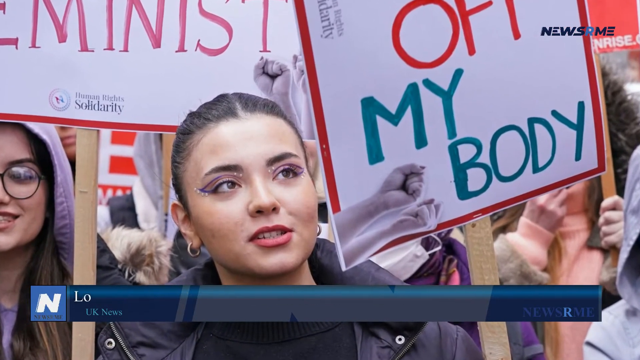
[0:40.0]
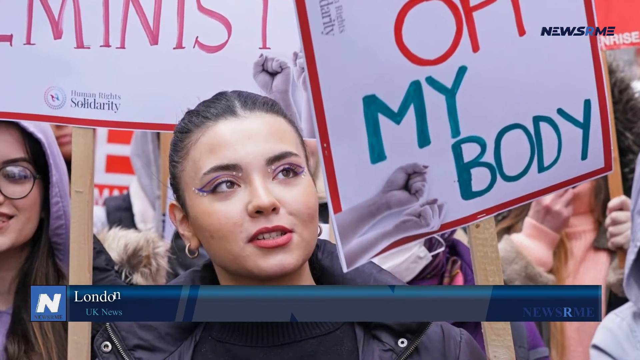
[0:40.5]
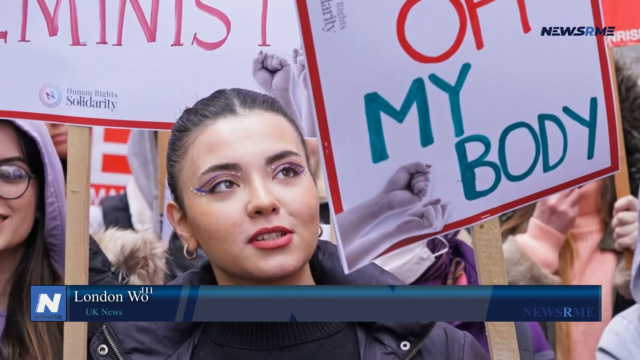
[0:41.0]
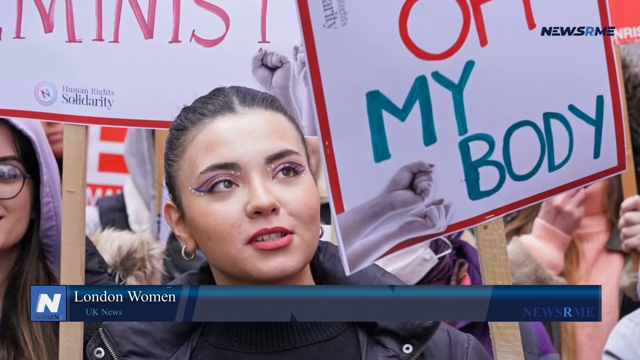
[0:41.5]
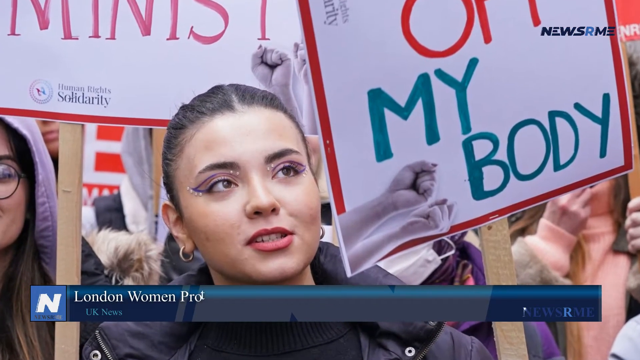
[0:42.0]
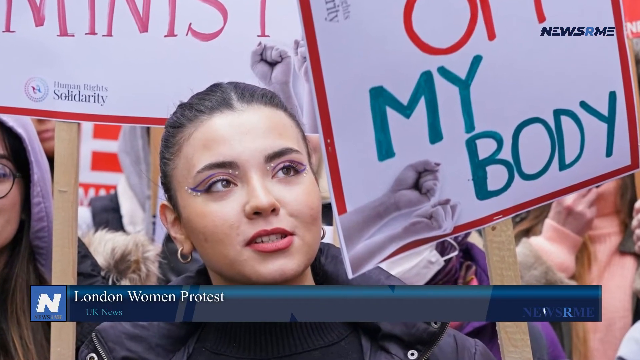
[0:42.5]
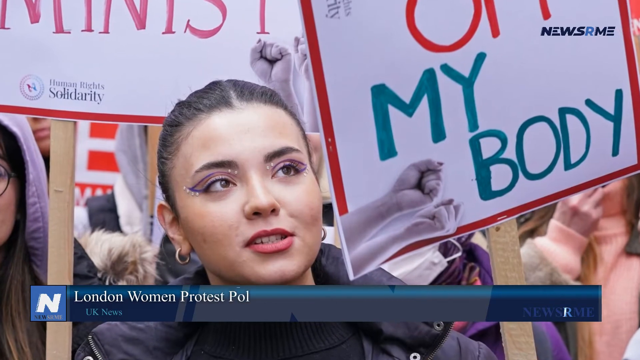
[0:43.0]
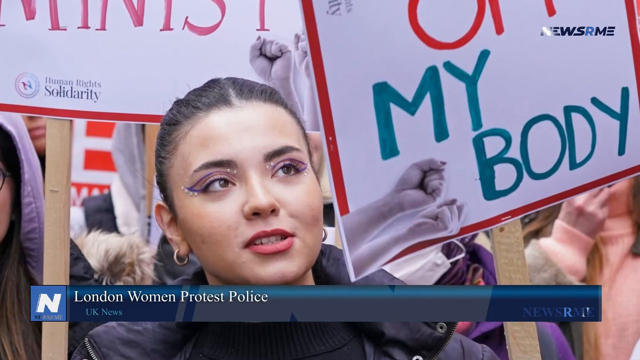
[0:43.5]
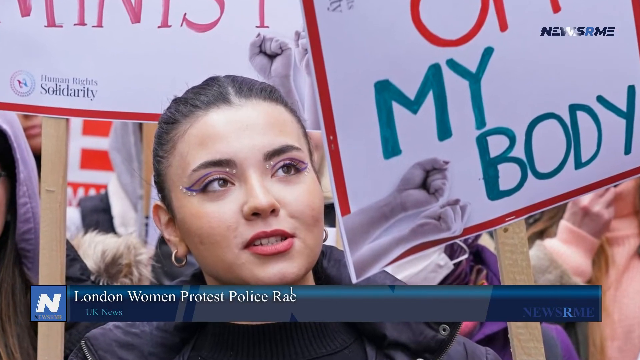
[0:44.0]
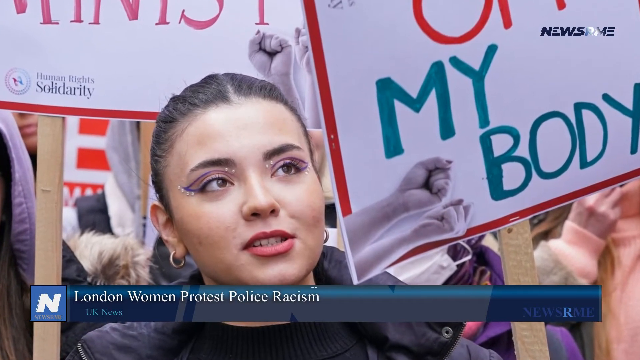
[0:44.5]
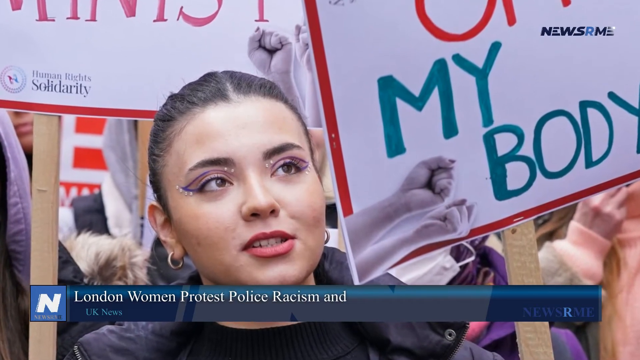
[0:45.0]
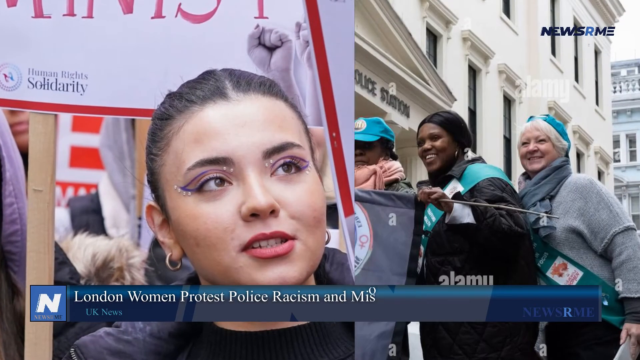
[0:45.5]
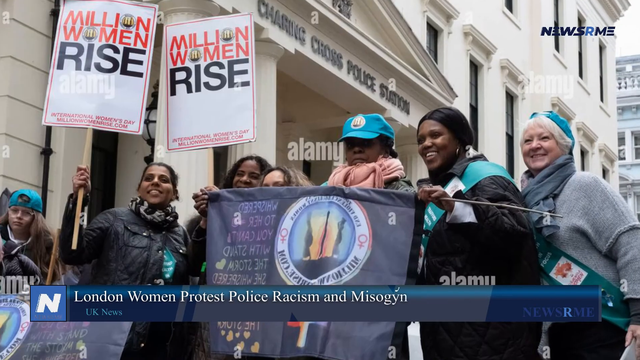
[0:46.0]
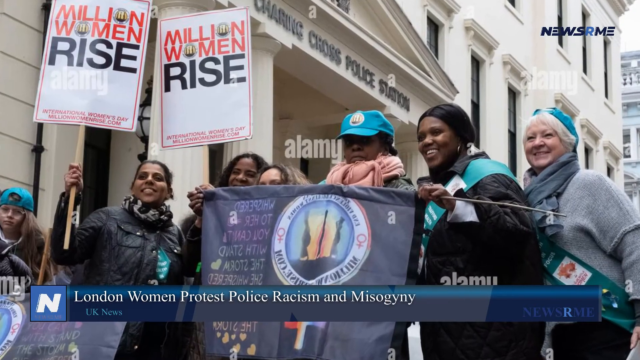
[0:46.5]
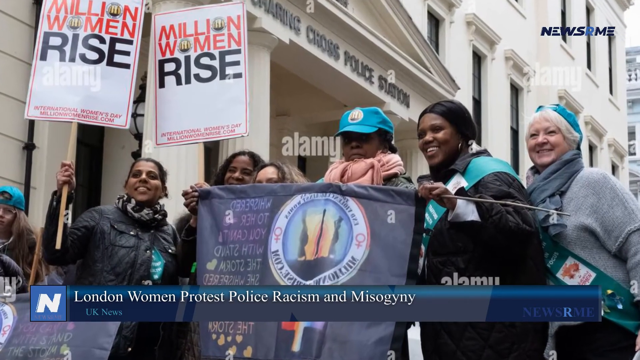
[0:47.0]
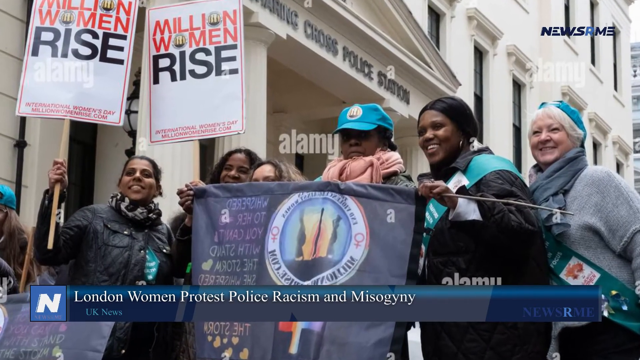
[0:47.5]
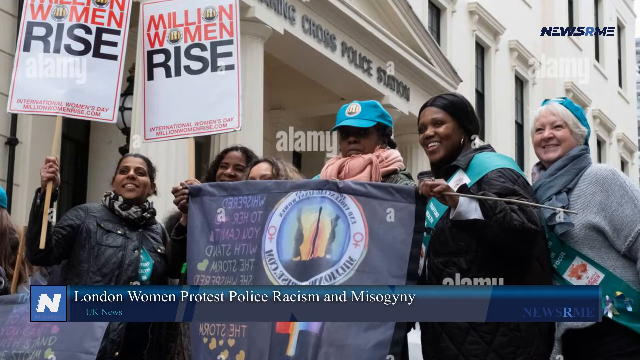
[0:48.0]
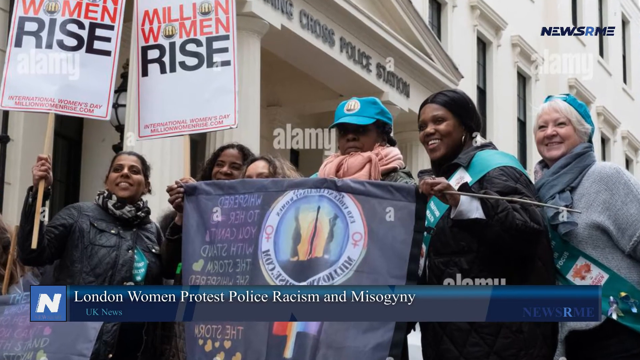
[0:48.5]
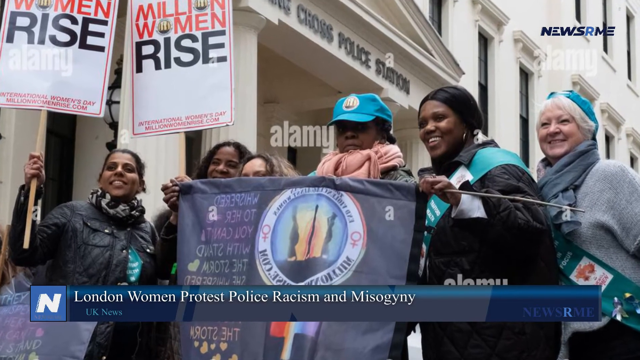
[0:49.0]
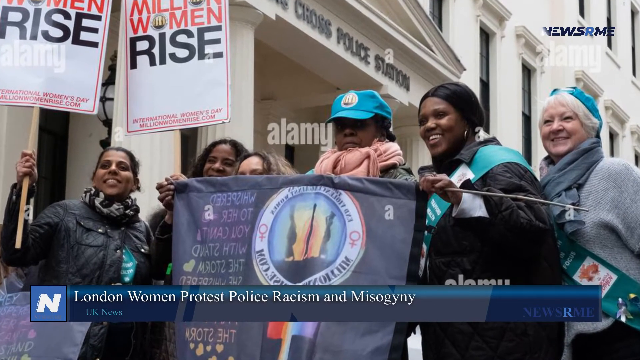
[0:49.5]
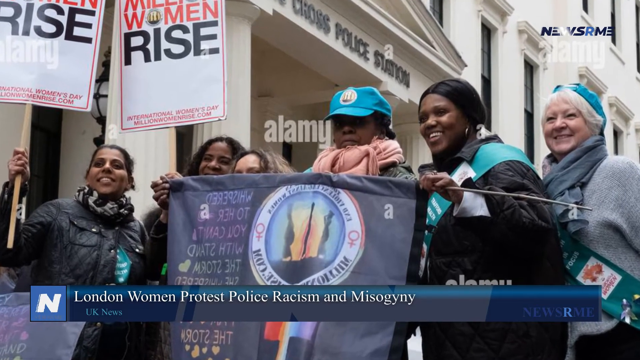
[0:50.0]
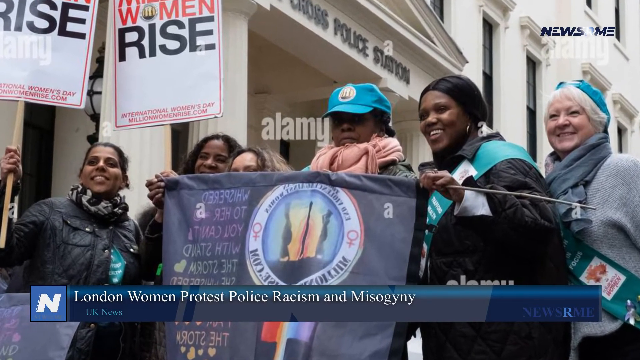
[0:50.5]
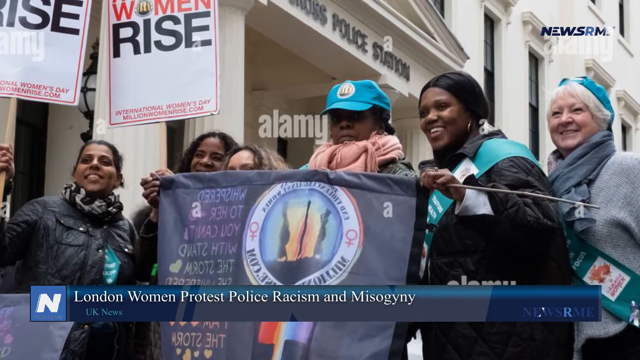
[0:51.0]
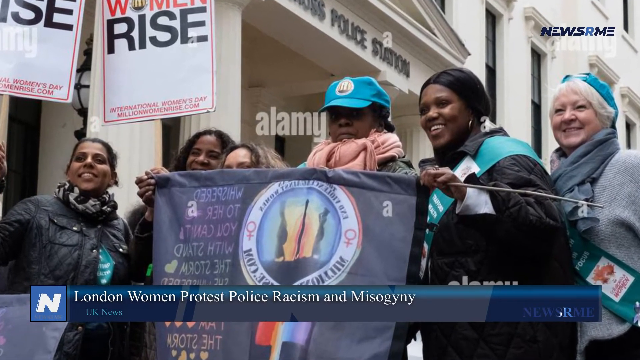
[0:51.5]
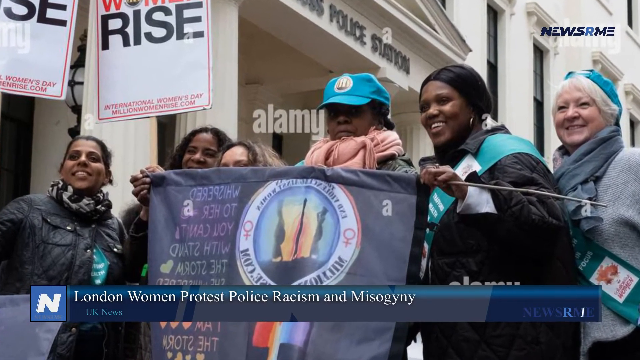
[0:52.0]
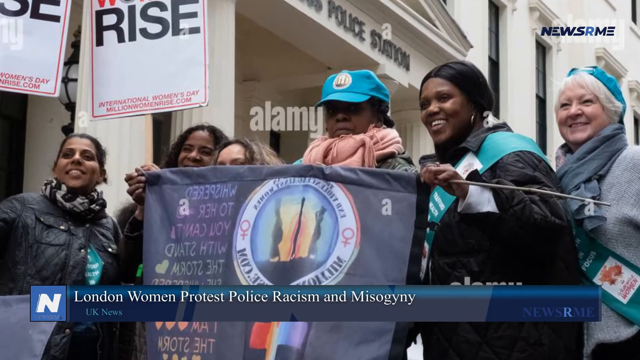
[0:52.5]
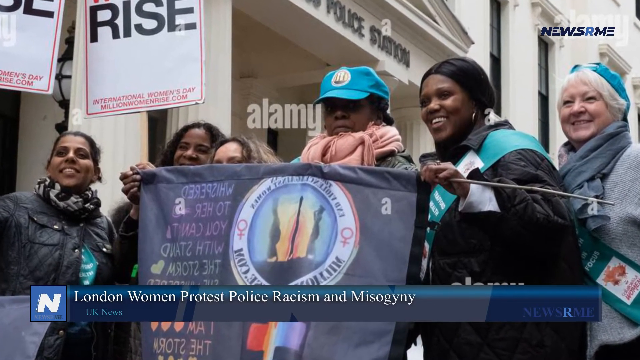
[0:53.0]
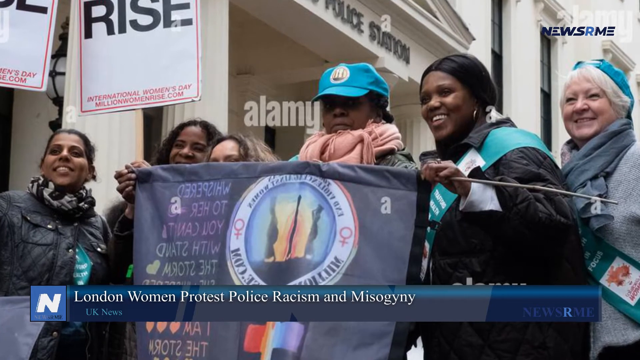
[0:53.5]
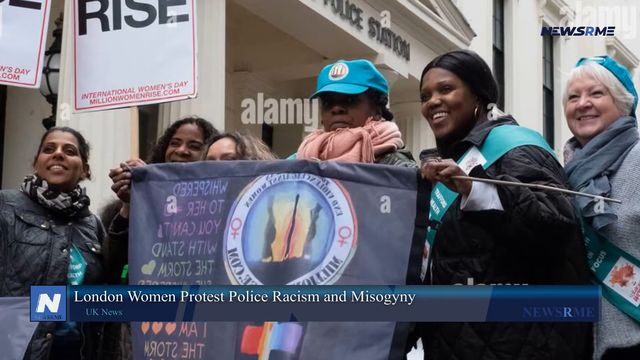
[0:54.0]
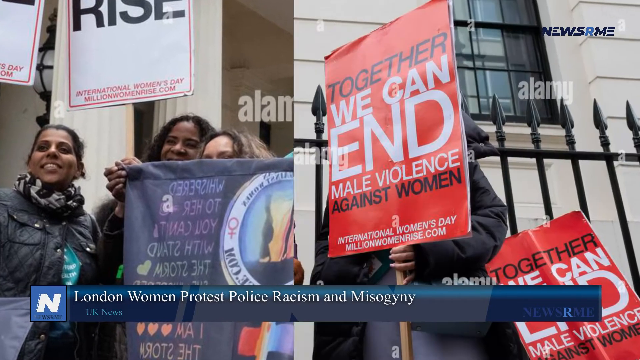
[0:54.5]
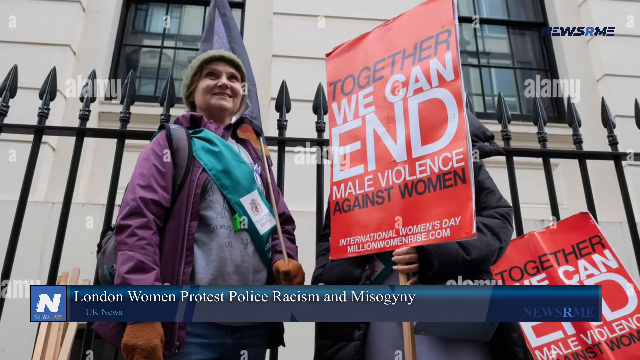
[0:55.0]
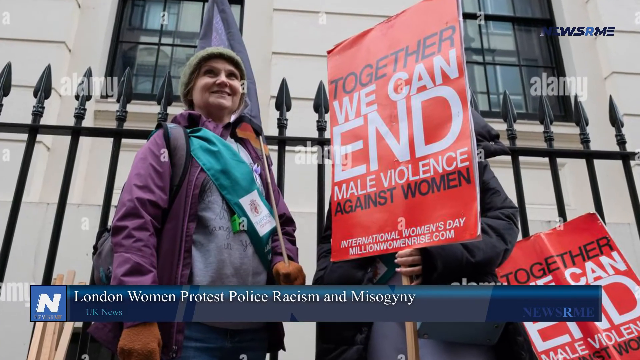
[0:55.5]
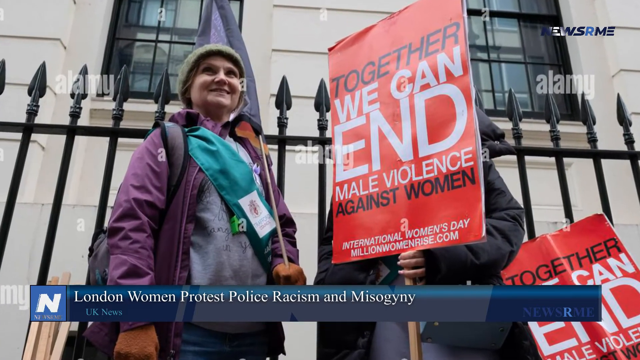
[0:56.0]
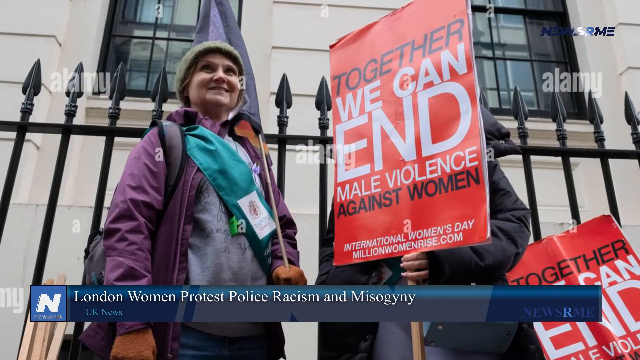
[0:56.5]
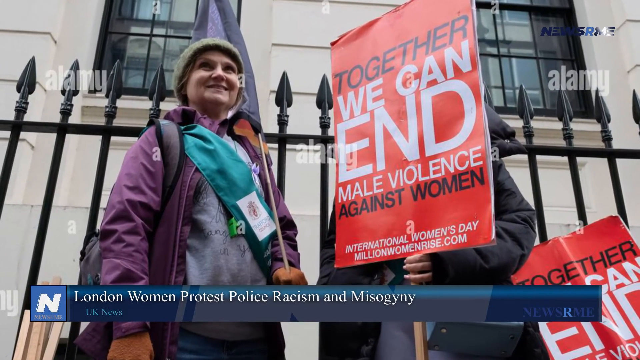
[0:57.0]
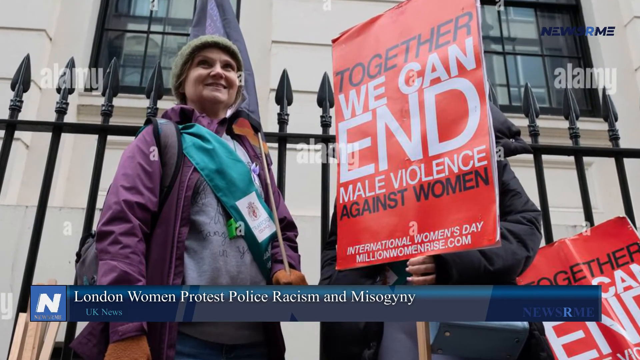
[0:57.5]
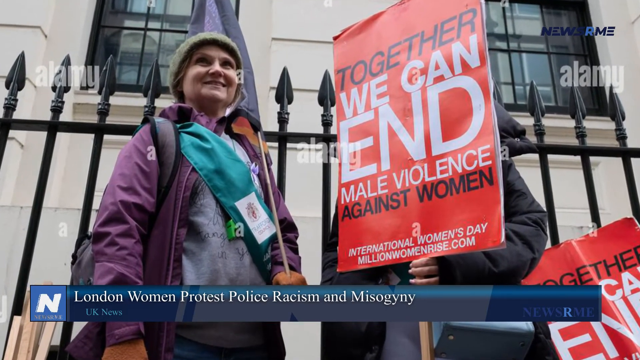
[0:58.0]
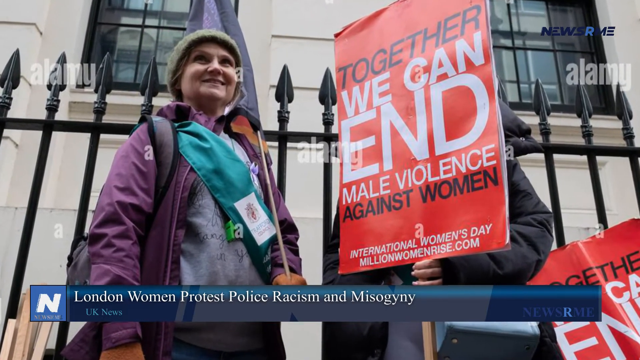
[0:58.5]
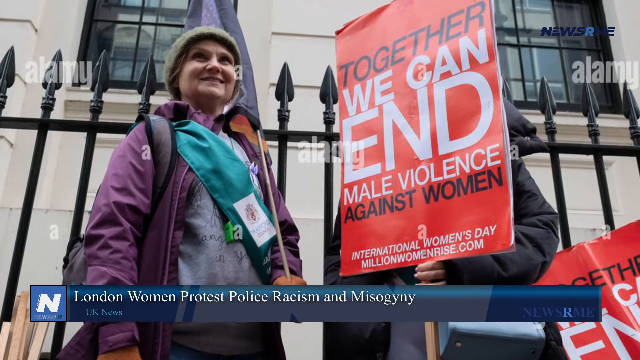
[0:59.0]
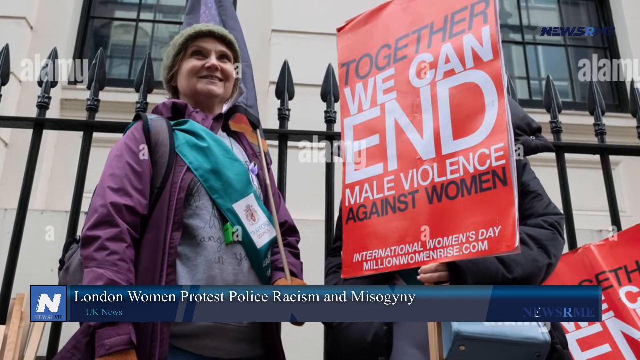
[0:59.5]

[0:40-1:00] More still photos from the protest appear, with the subject line at the bottom again about London women protesting police racism and misogyny. The first photo is the same as the first photo at the beginning, focusing on a woman carrying a sign with the message "off my body"; the rest of the message above it is cropped out. She looks up and to the right and wears elaborate eye shadow makeup, and the women and other protesters around her also carry signs and wear jackets. The next photo shows more women, with a building in the background that says "police station" on top, and their signs read "million women March." A third photo shows more women carrying signs that say "ends male violence against women." The protesters are in the streets of London, assembled outside a police station and carrying signs with various messages.